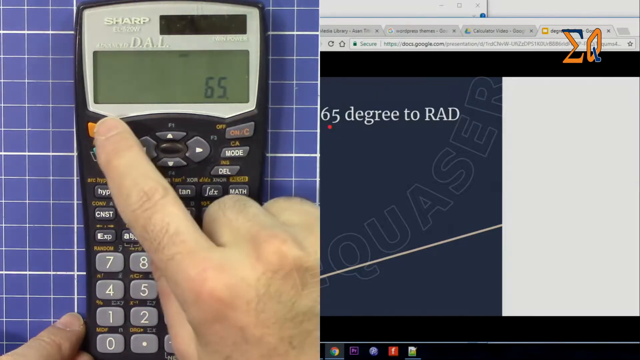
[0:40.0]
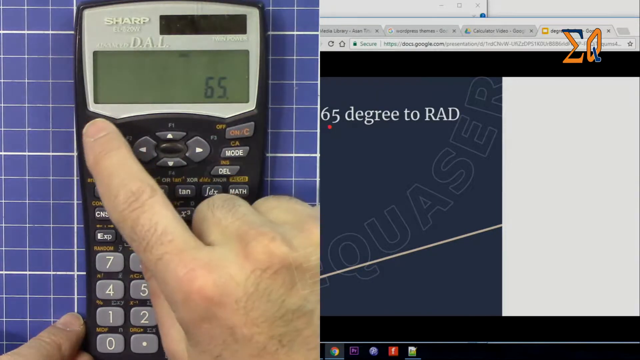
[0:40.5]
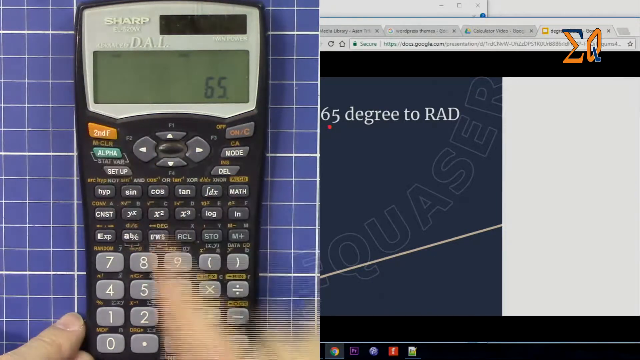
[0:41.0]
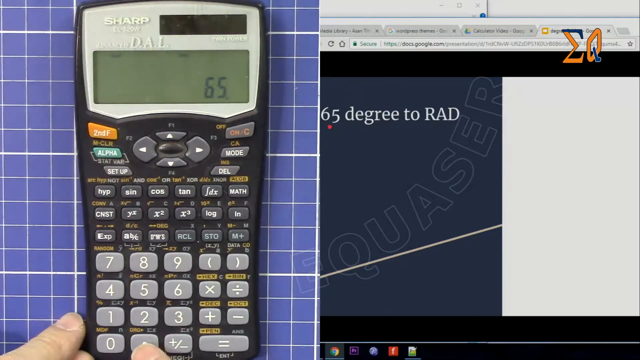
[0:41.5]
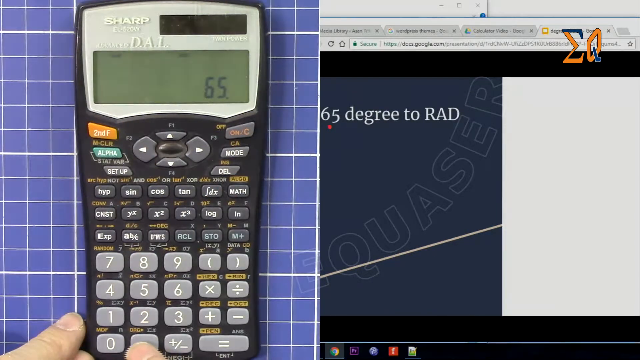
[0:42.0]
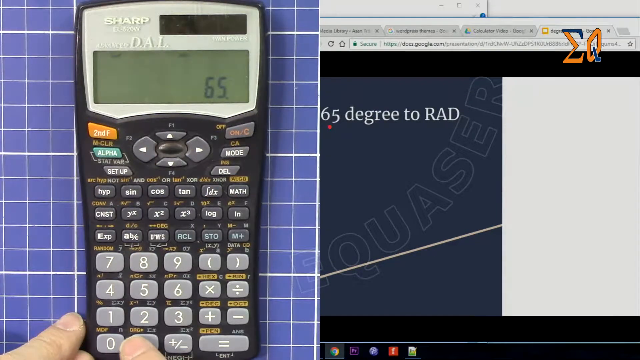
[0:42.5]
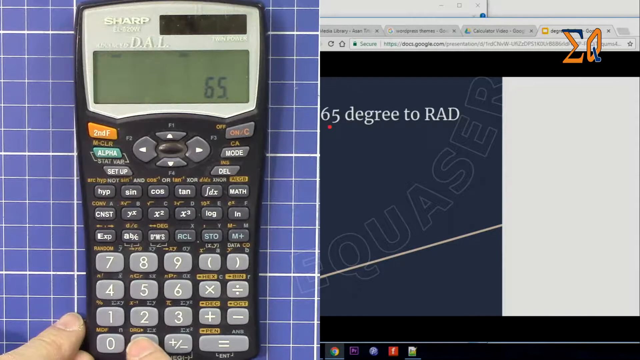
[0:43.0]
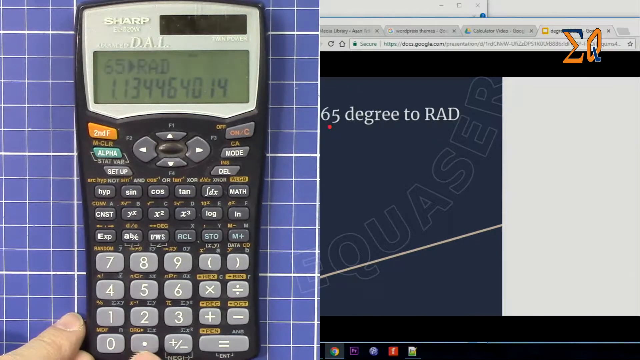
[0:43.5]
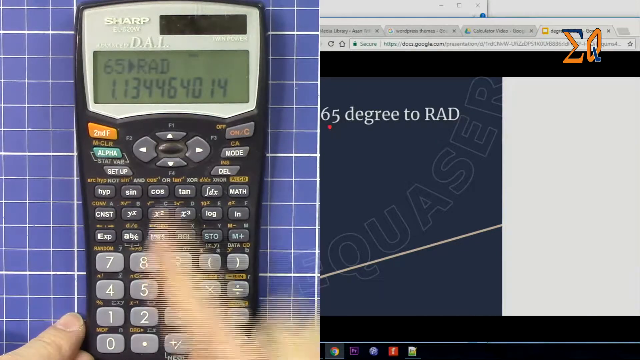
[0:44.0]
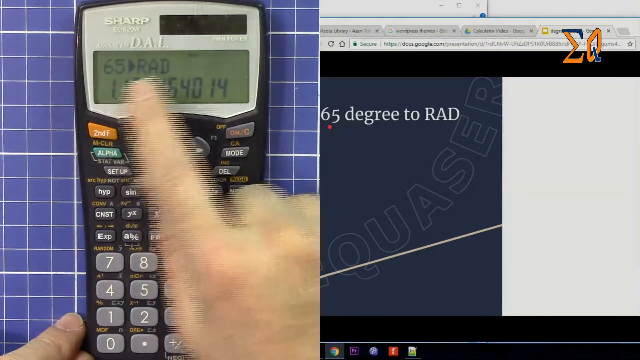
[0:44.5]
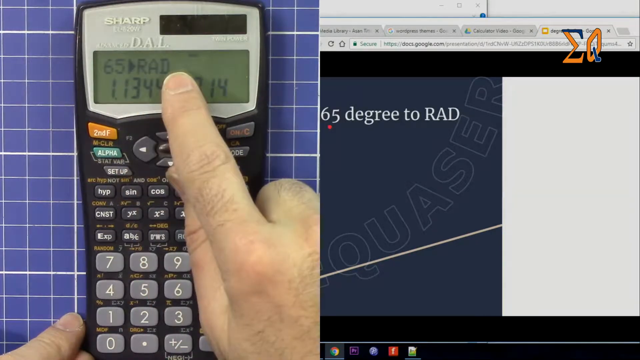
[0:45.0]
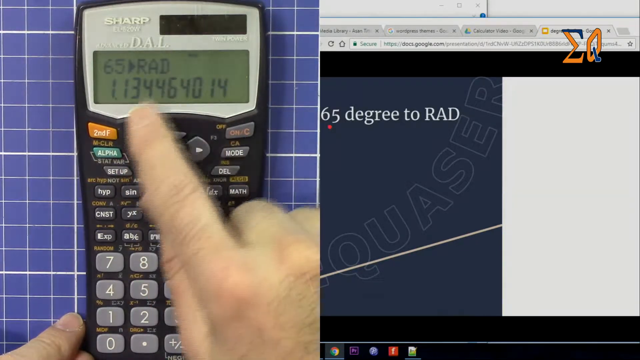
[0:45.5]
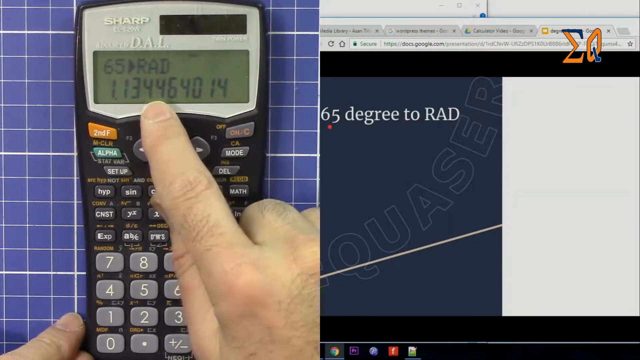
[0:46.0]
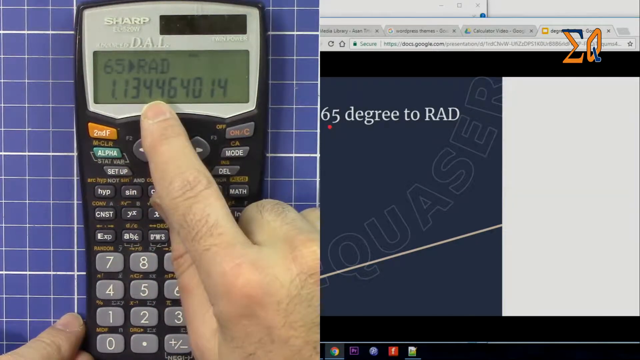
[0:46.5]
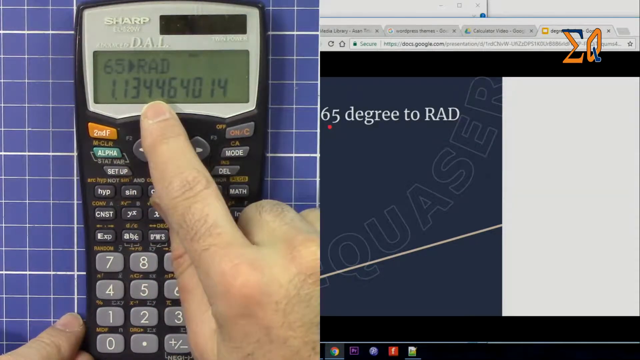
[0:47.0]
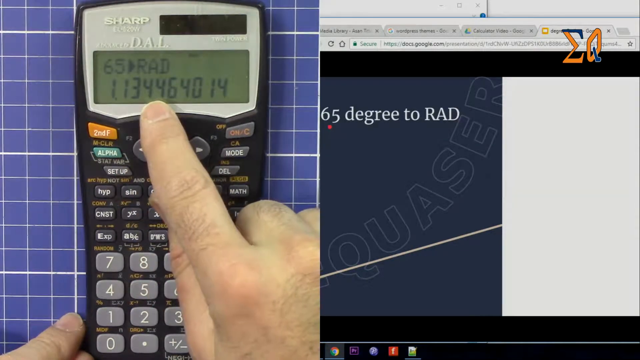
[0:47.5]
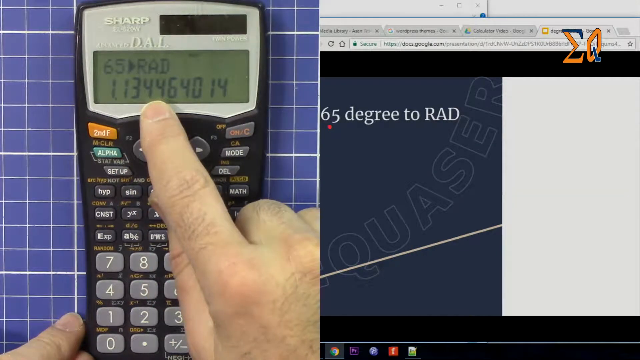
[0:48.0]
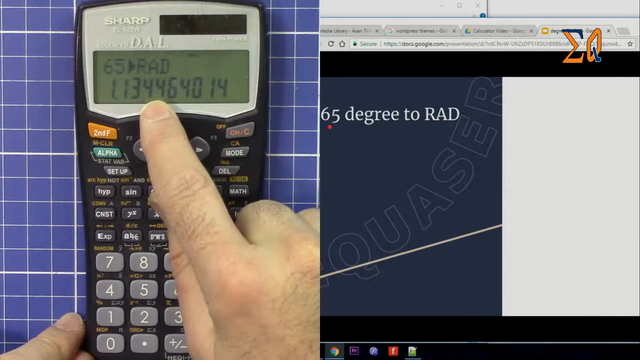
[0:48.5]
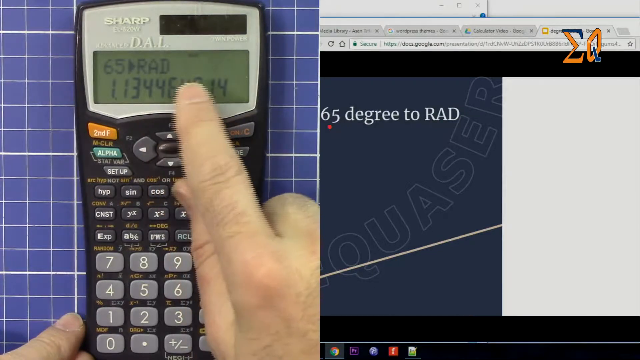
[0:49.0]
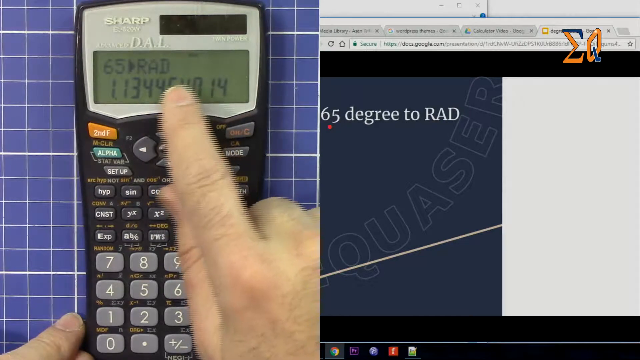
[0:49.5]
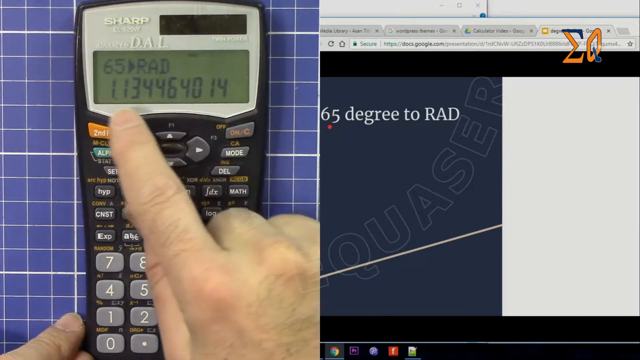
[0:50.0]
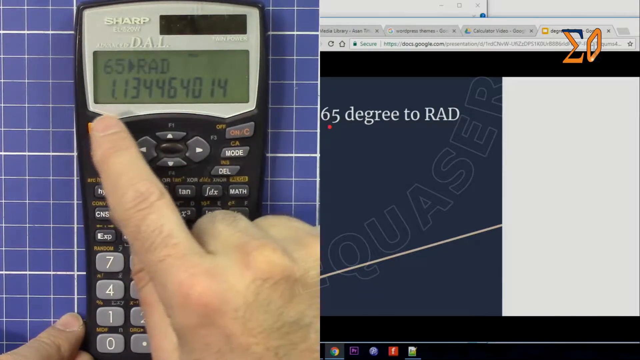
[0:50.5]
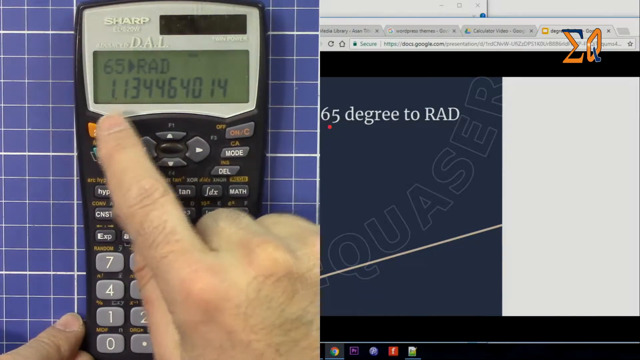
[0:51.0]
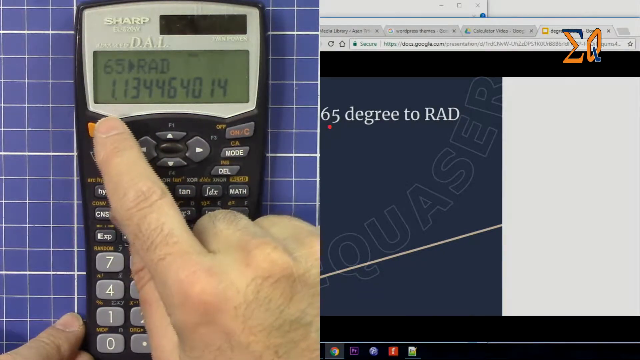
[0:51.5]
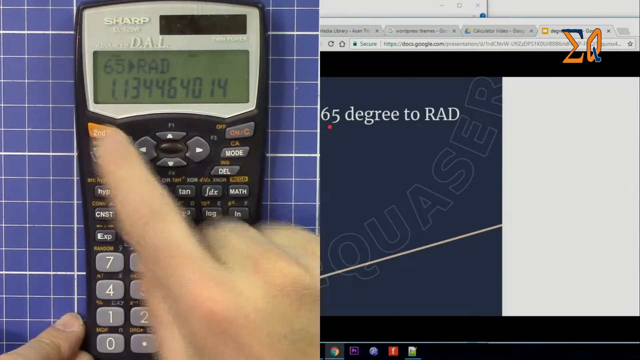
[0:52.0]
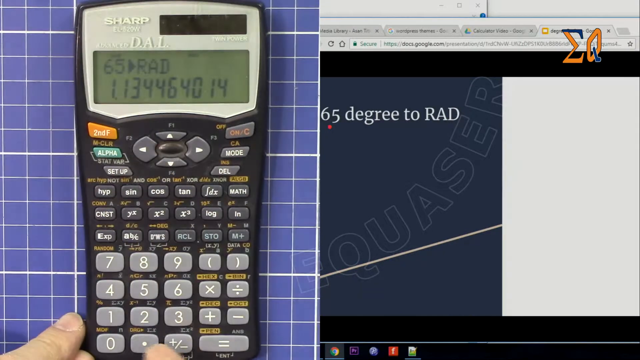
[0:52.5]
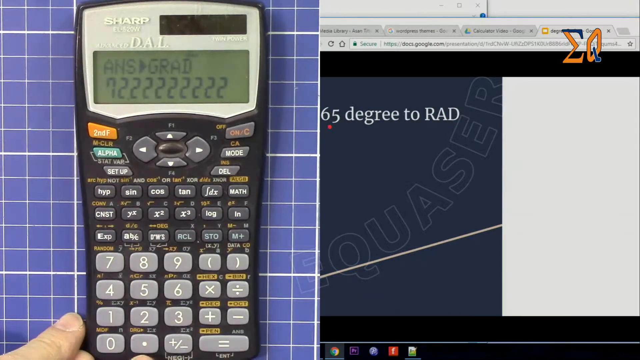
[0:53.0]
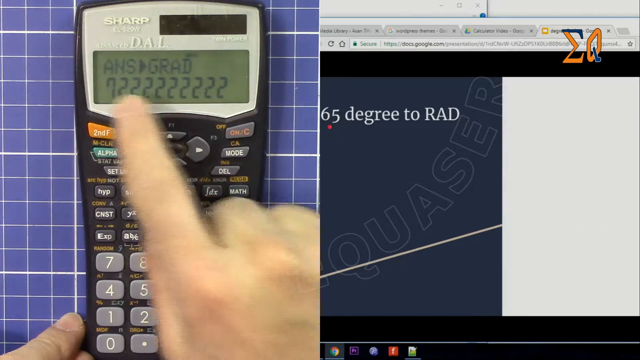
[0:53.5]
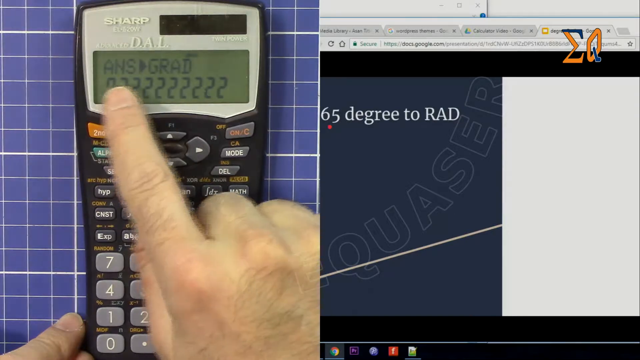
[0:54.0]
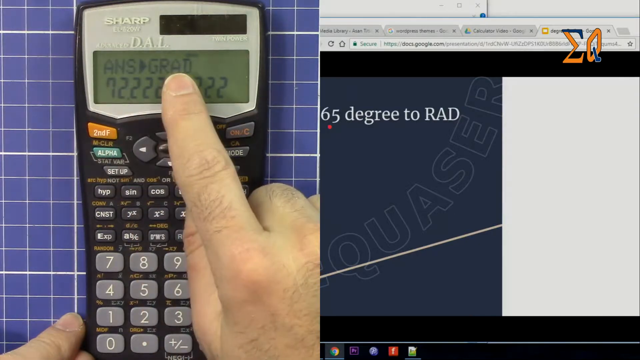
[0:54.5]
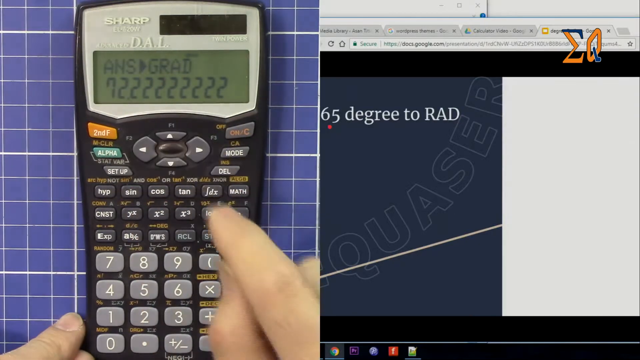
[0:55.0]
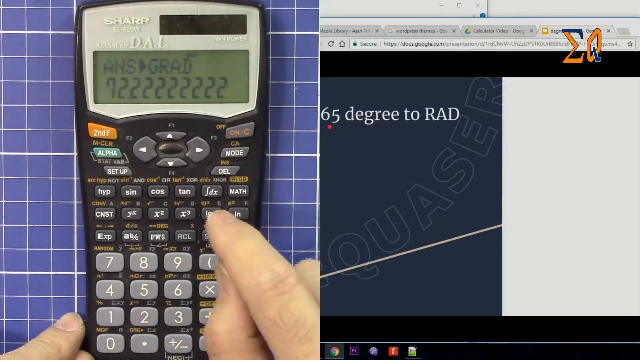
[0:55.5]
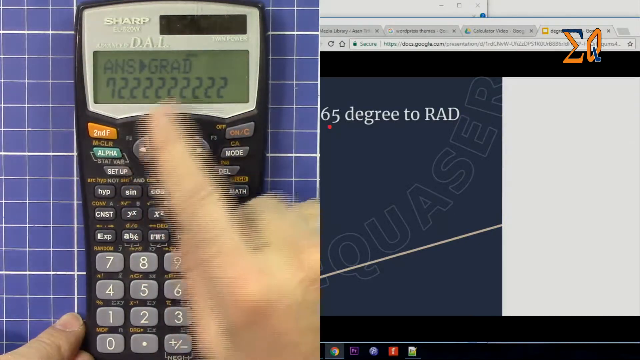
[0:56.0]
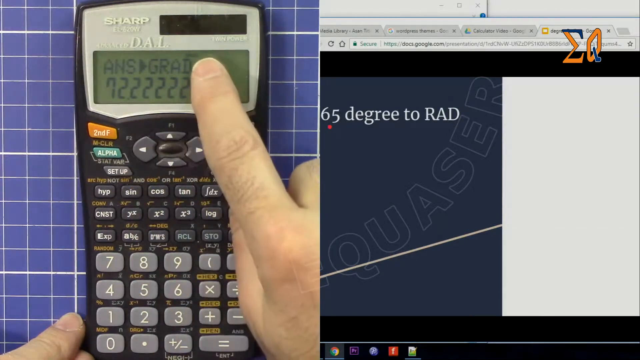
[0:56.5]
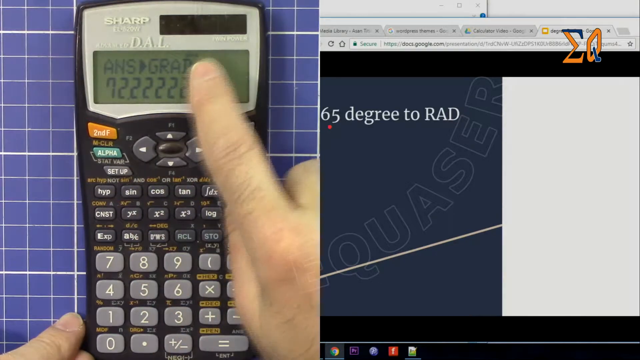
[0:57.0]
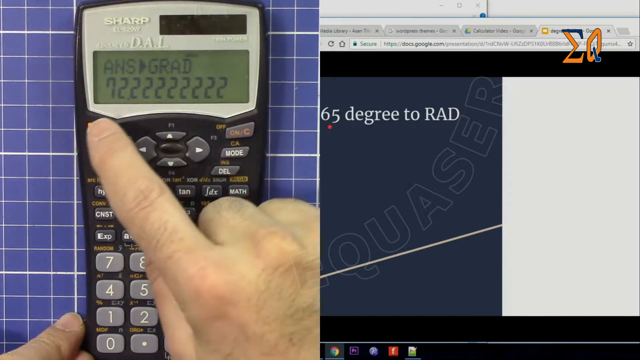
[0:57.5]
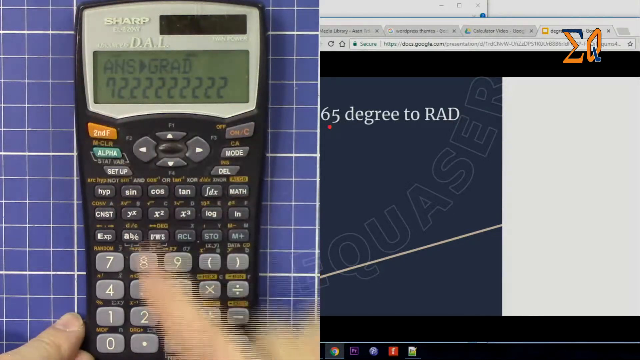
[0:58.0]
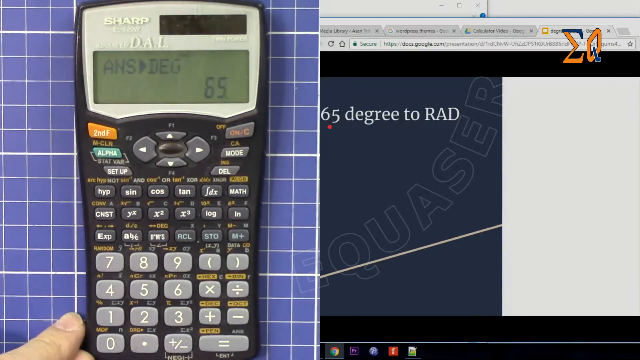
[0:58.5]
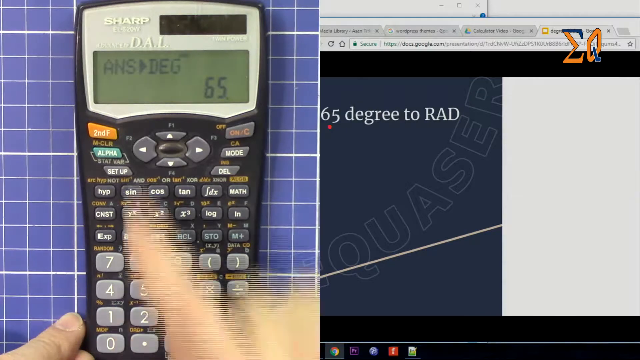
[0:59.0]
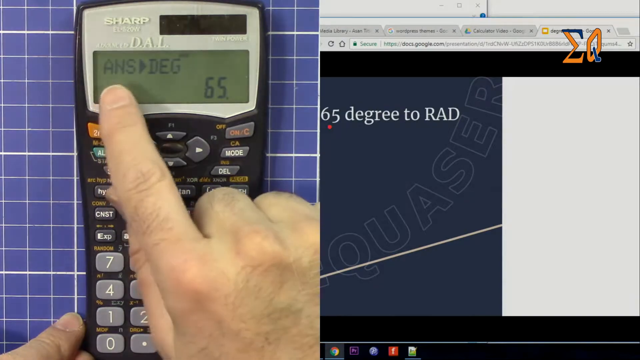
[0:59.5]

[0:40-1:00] The calculator screen shows "65". The right hand comes in from the bottom right corner, with the pointer finger going up to the left. A little of the knuckles of the first two fingers is visible, along with a little of the top of the middle and ring fingers, which are curled under the hand. The finger pushes the top button on the left side, which is orange and says "second F" on it. In the bottom left, the thumb is just barely visible. The screen now shows "65" with an arrow pointing to the right to "rad", and underneath are the numbers "1134464014". The right hand points at it, across the top row and then across the numbers, holds the finger in the center for a moment, then moves over to the left side and touches the orange button again. The top changes to "ANG" with the arrow and then "grad", and below it is the number seven followed by nine twos. The finger points at it, goes down toward the number keys on the calculator, goes back up to point at it again, and hits the orange button on the upper left side.